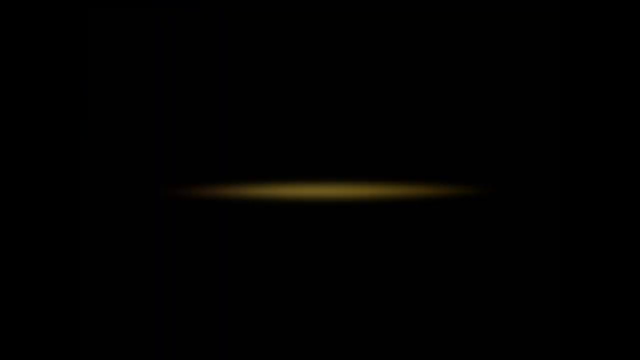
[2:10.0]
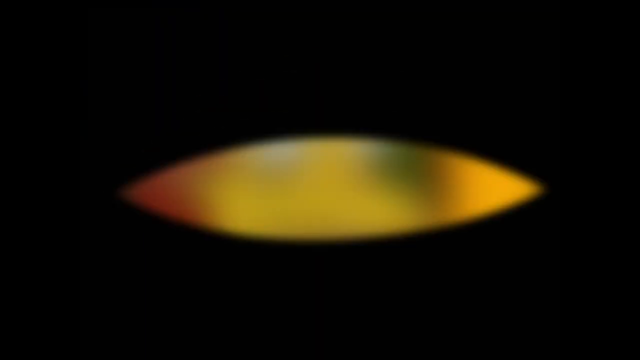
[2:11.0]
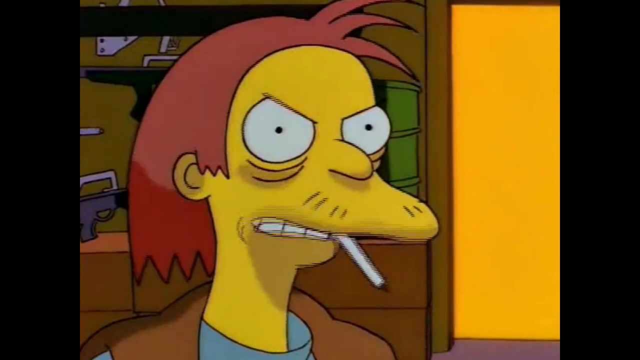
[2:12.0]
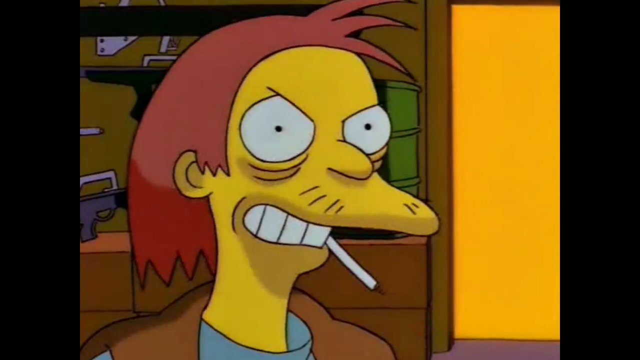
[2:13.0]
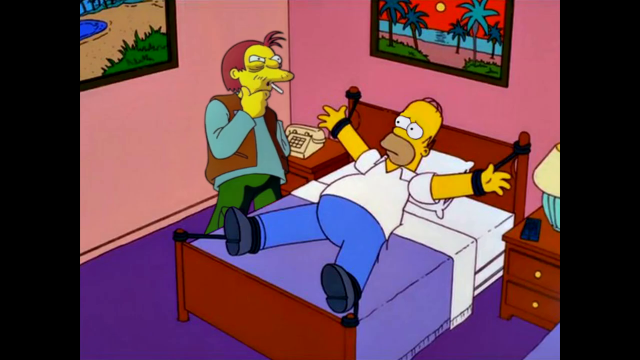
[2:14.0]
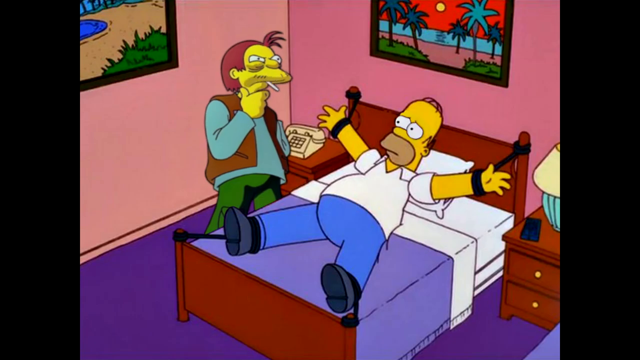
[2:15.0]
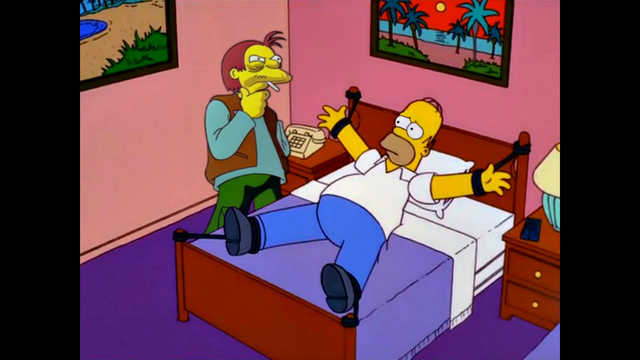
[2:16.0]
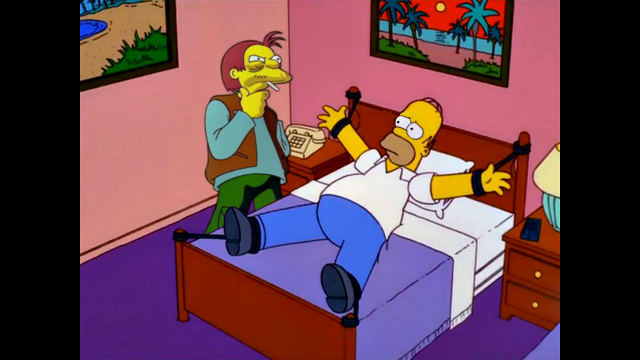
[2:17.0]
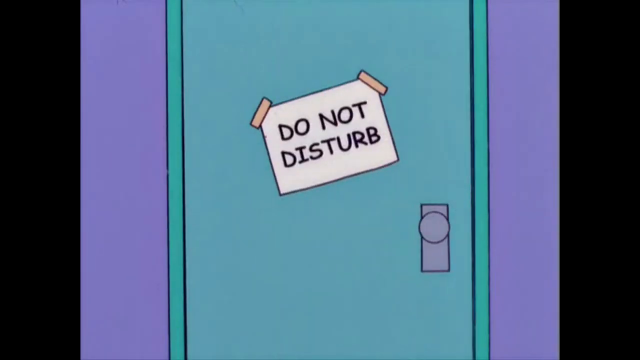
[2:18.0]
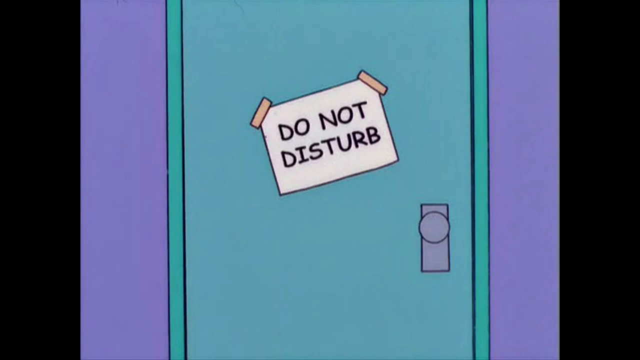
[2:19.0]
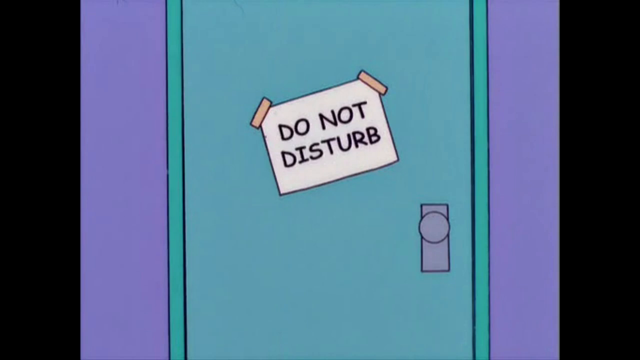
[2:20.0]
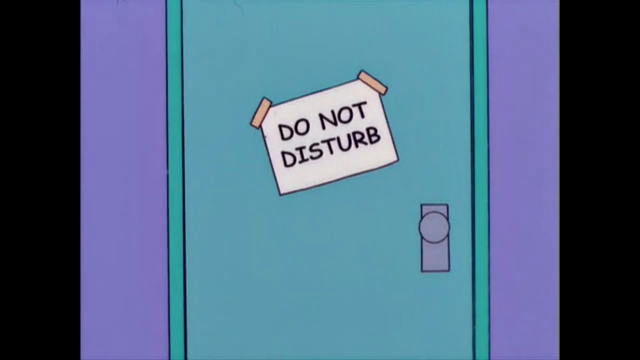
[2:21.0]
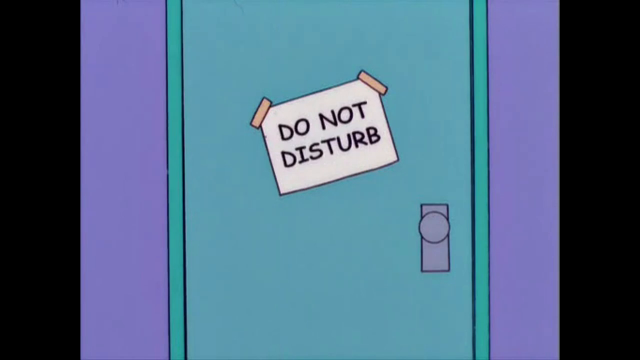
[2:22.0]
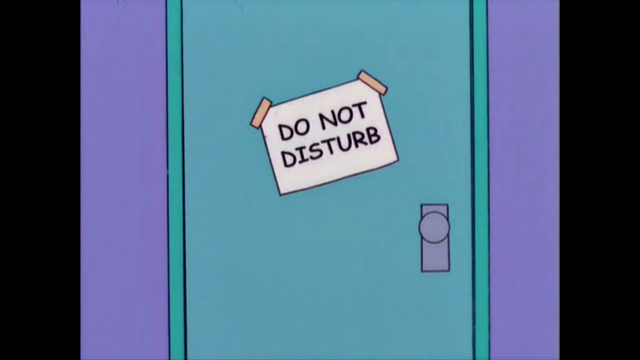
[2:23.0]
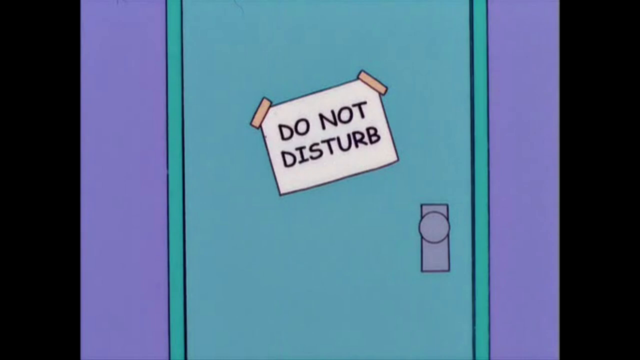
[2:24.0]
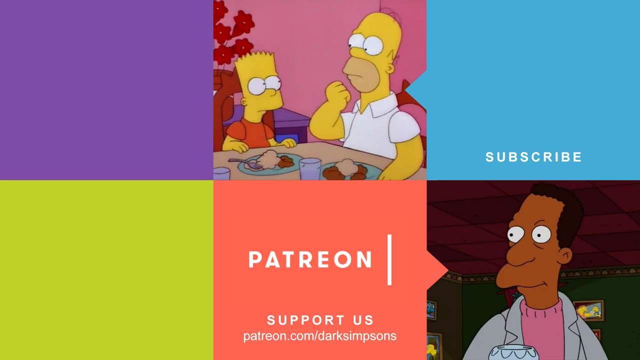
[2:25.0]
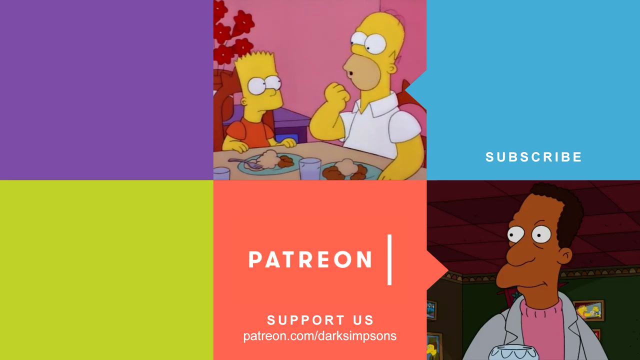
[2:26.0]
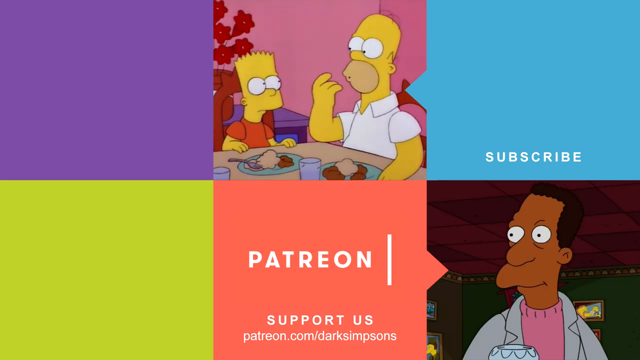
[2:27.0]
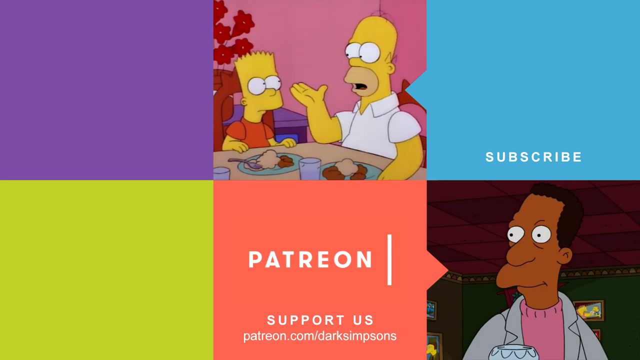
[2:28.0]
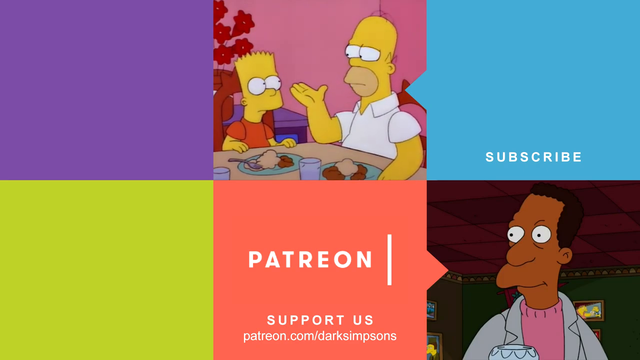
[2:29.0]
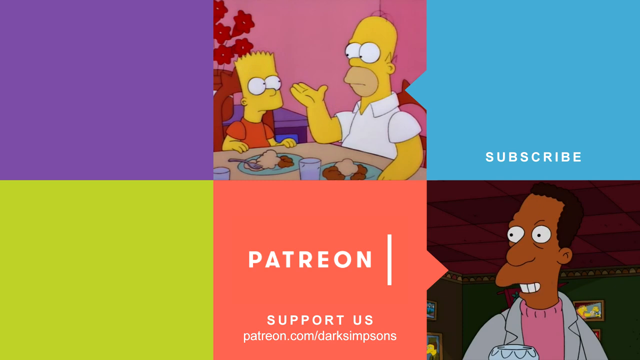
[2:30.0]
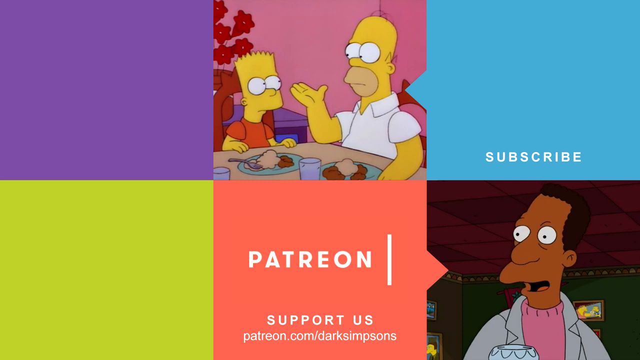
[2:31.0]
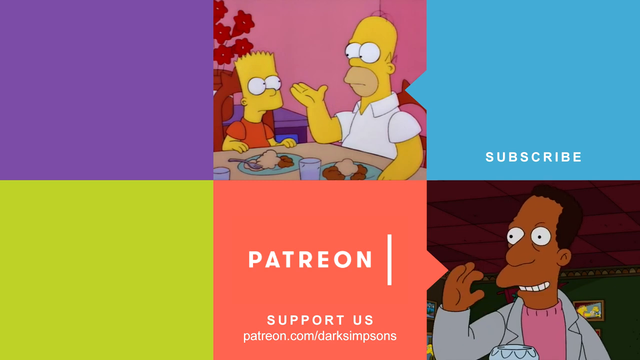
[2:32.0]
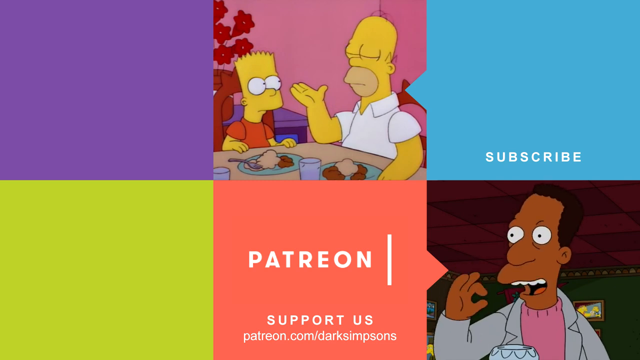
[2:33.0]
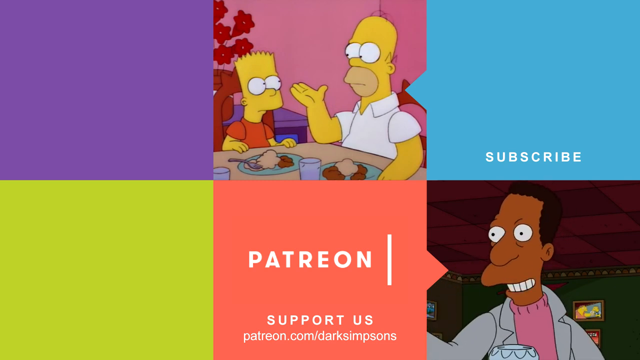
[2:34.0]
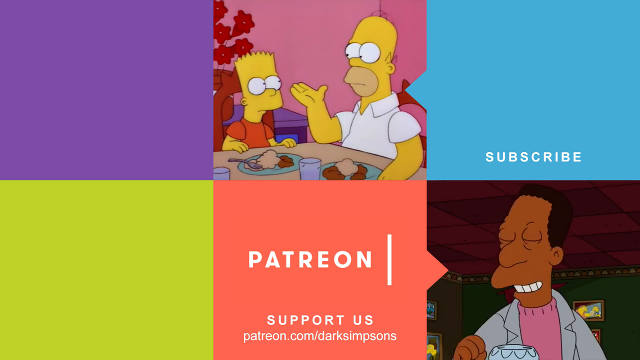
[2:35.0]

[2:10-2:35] From the darkness a slit in the center slowly opens, opening and closing as if trying to focus, apparently like an eyeball. It opens to show a red-headed man looking menacing, with bags under his eyes. Guns are behind him on the left side, with a barrel to the right of his head, on a wooden shelf. A cigarette hangs out of his mouth, pointing down to the right, as he stares. Homer is tied to a bed, his feet down to the left and tied to the bedposts and his hands tied. He wears a white shirt and blue pants and looks up to the left, scared, at the man with the cigarette, who rubs his chin and talks to Homer. There is also a phone and some posters. A blue door shuts, with a white sign taped to it that says "do not disturb". The scene cuts to a screen divided into six sections, three across the top and three across the bottom. There is a purple square in the top left; Homer sits on the right side at the dinner table with food in front of him, talking to Bart on the left; a blue square says "subscribe"; a yellow one is empty; a purple one is for Patreon; and the last, in the bottom right corner, shows the African-American character. Homer moves, talking with his hand out in front of him, while the man at the bottom also talks, moving his hand up and down a little.